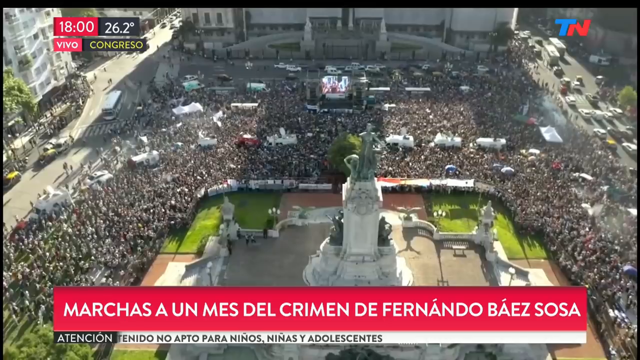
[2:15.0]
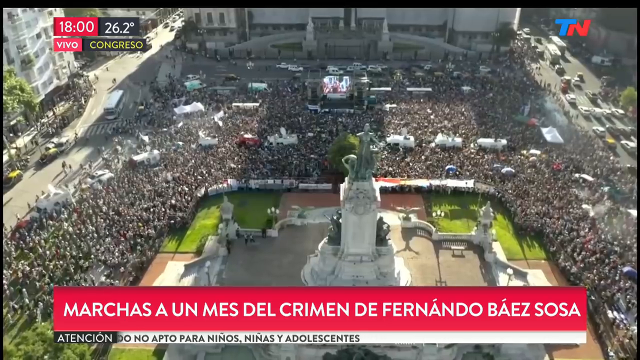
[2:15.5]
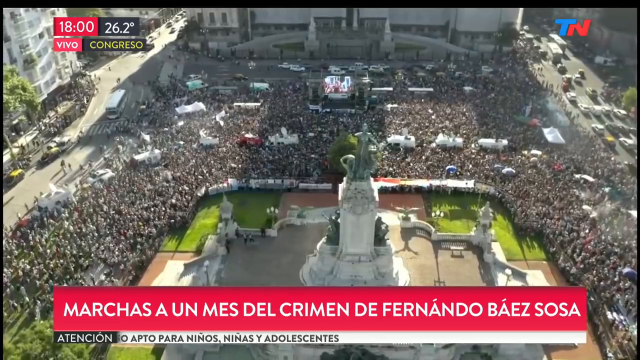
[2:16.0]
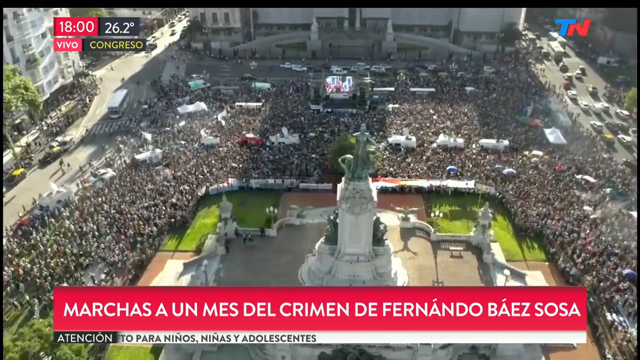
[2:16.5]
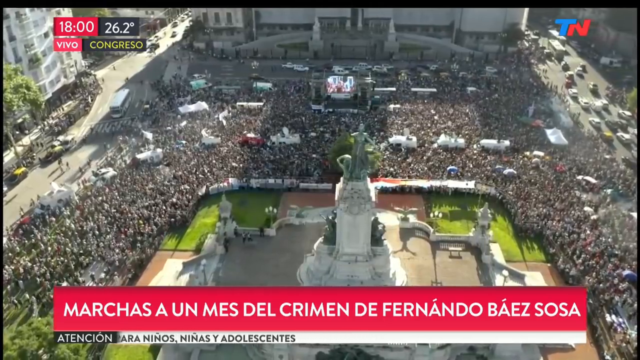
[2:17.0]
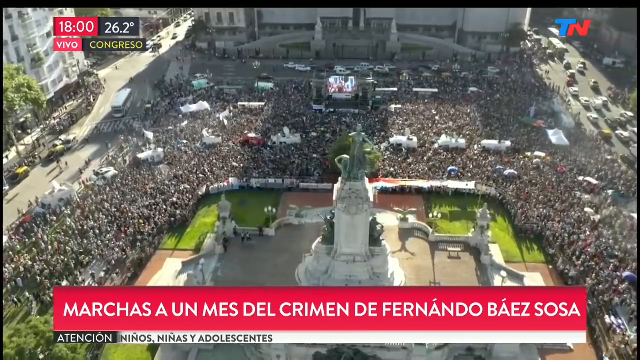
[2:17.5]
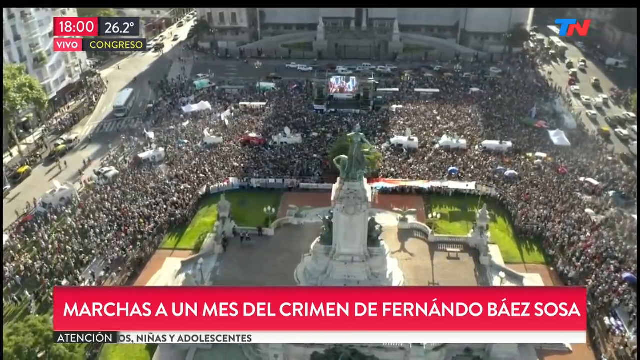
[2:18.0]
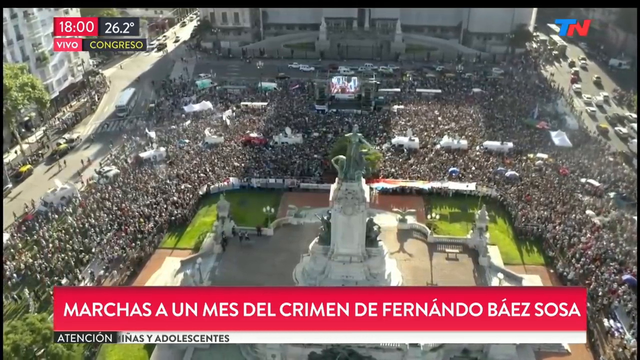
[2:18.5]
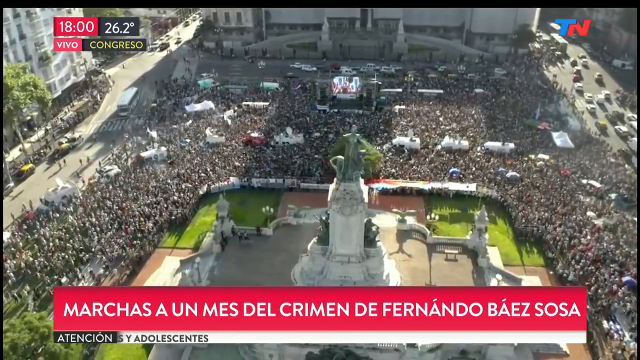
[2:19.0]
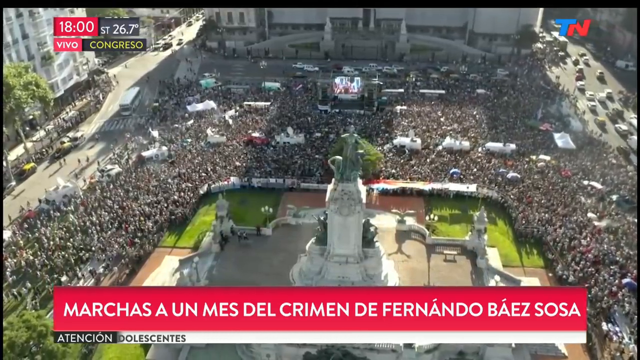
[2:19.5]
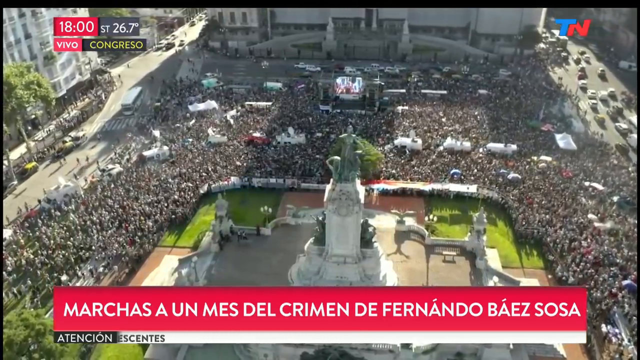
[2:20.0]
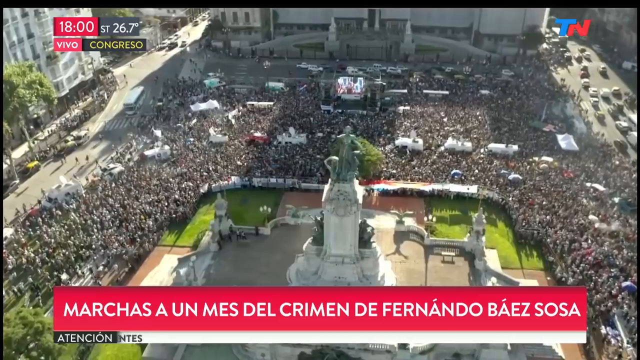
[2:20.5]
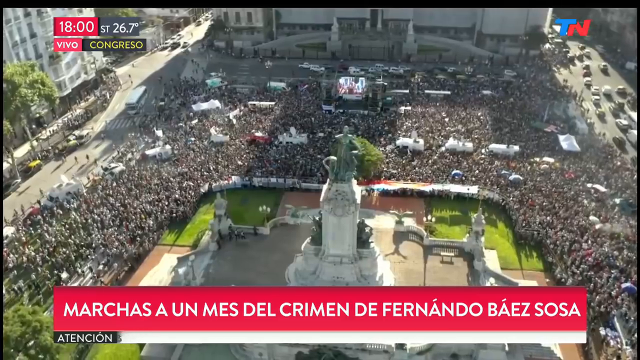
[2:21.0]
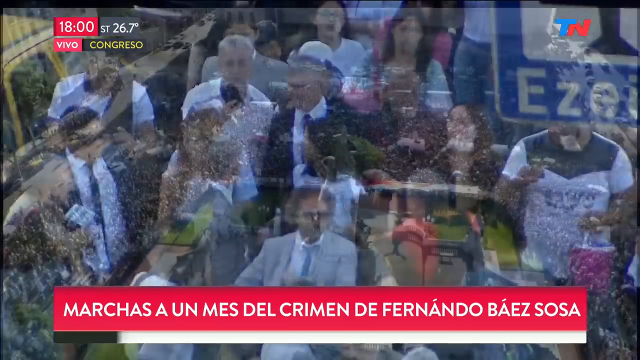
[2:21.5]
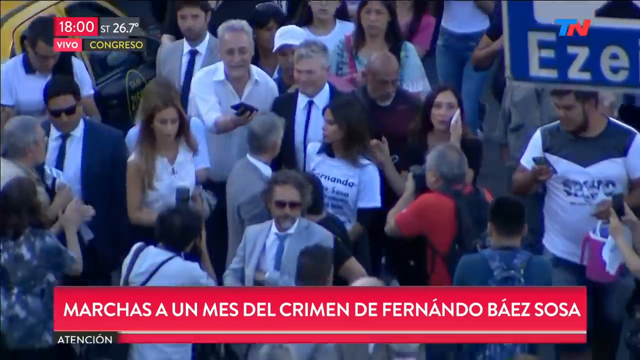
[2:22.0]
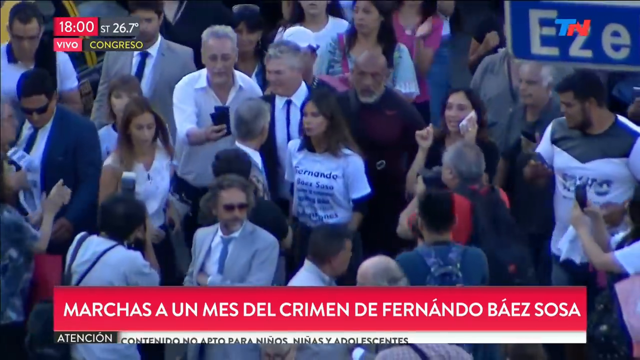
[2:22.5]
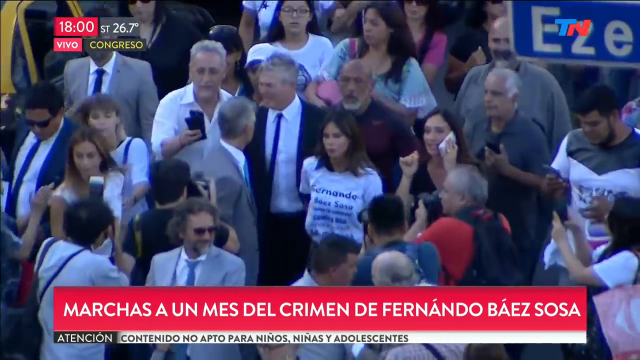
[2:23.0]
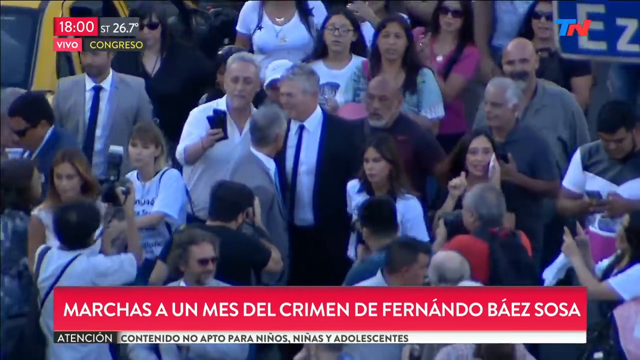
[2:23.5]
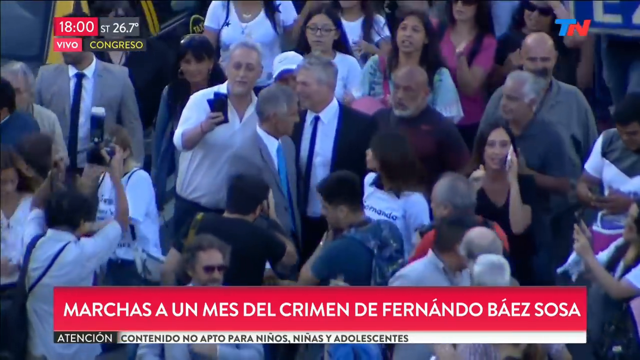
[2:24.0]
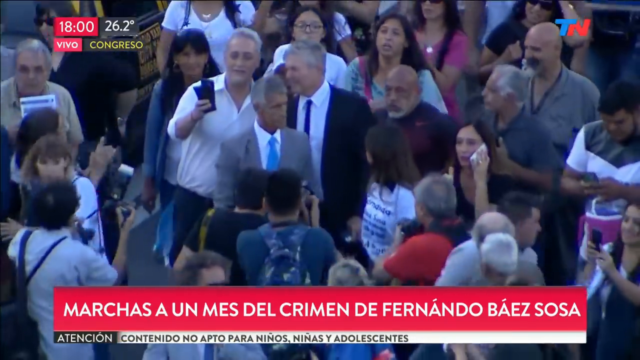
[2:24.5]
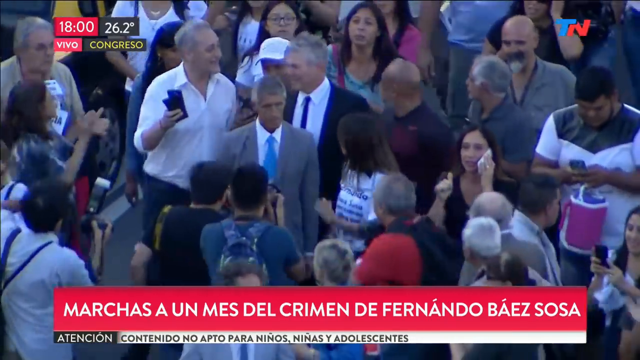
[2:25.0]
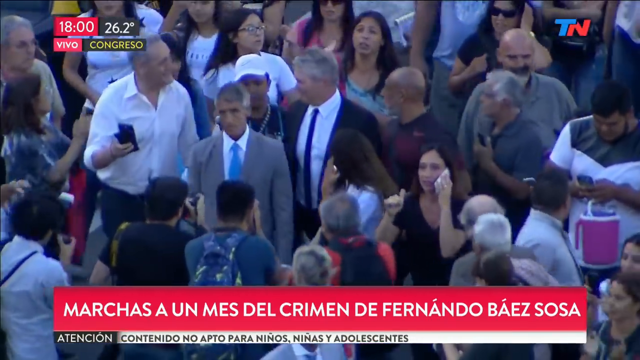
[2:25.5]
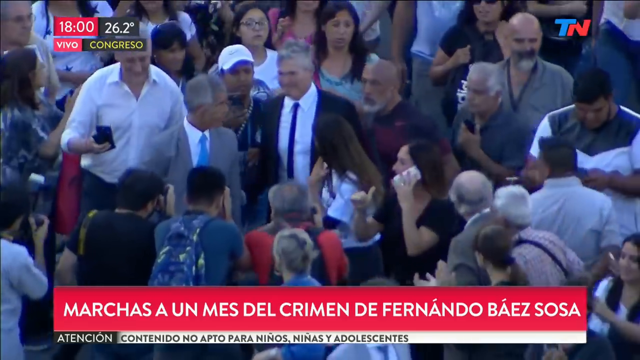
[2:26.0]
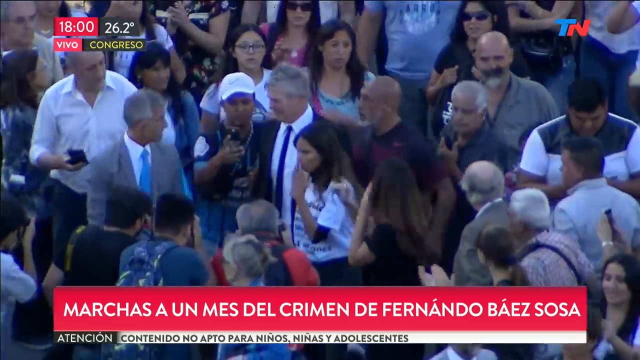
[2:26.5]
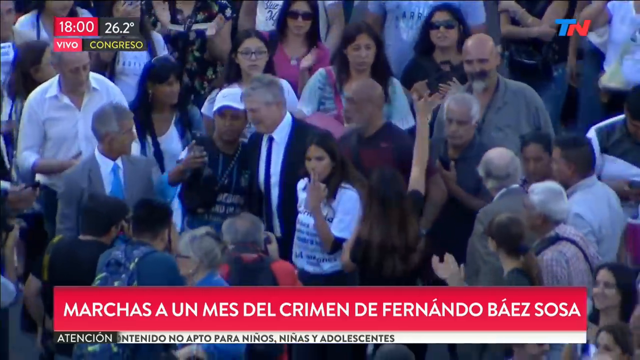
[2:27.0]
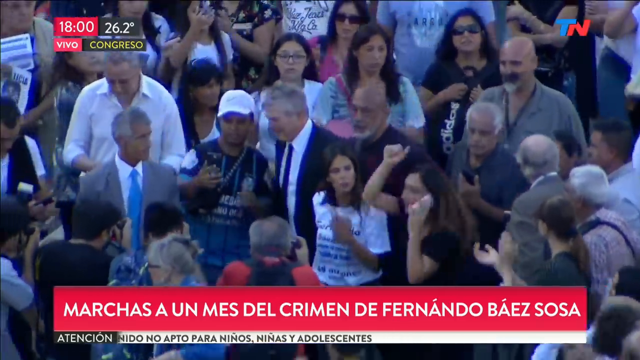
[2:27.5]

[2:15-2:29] An overhead aerial zoomed-out image shows a city square packed with people. On the left and right are streets packed with cars, and in the background is a very large building that the crowd stands in front of. The video pans slowly to the right, then shows a close-up of the crowd, many of whom are on or holding up their phones. A man in a black suit, a white shirt, and a black tie walks through the crowd as the center of attention, followed by most of the people. A person takes a selfie with the man in the suit as they walk toward the camera, and the crowd is so dense that everyone appears to have difficulty moving around.